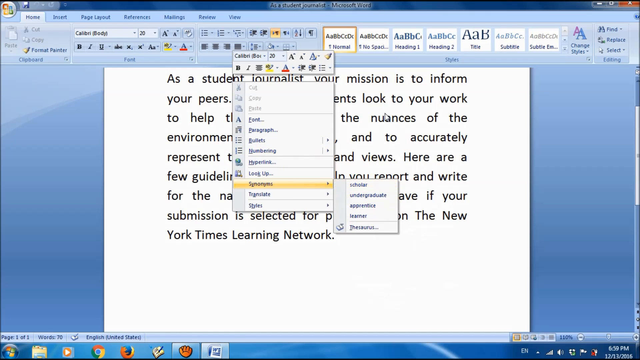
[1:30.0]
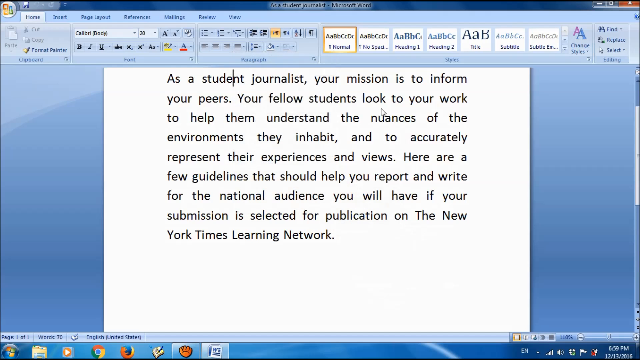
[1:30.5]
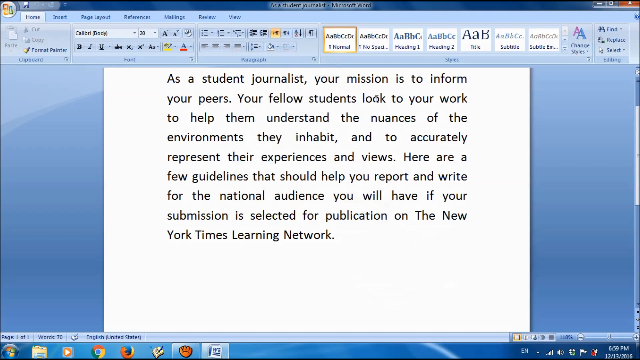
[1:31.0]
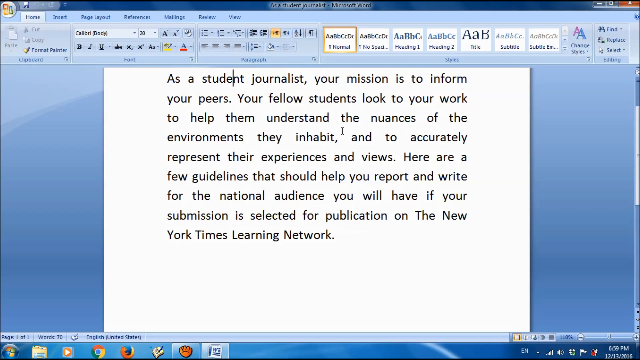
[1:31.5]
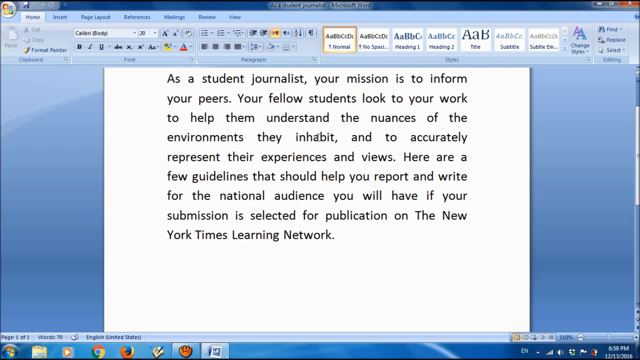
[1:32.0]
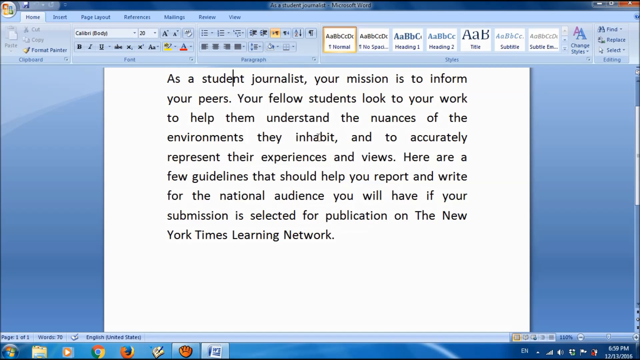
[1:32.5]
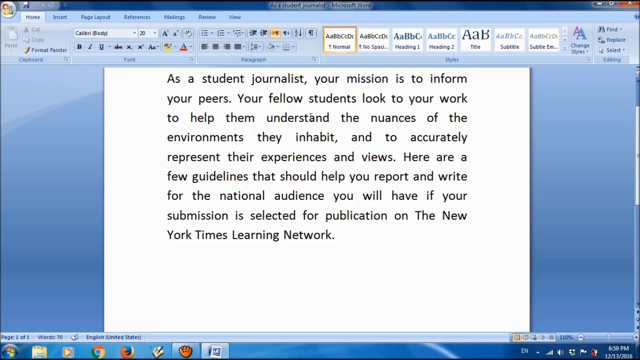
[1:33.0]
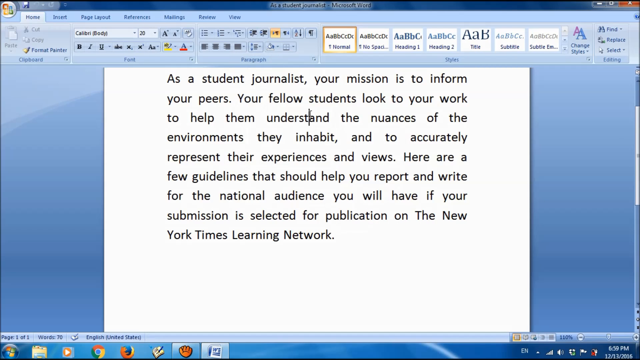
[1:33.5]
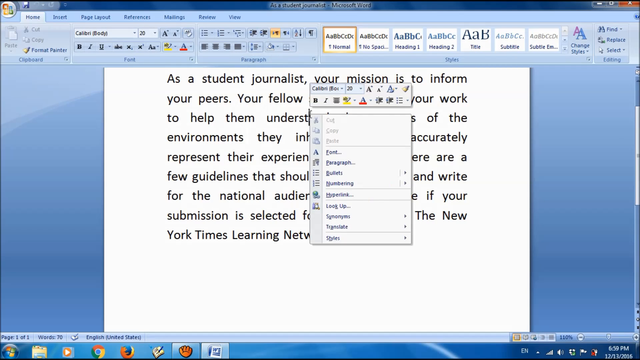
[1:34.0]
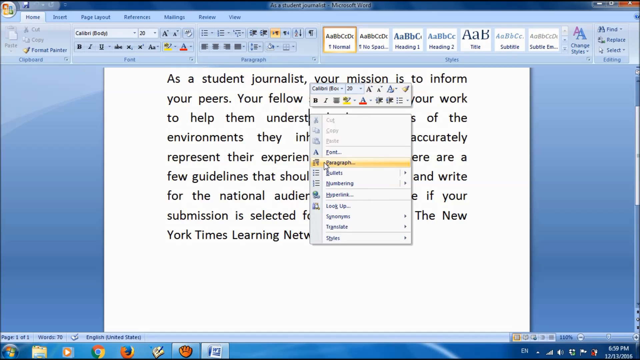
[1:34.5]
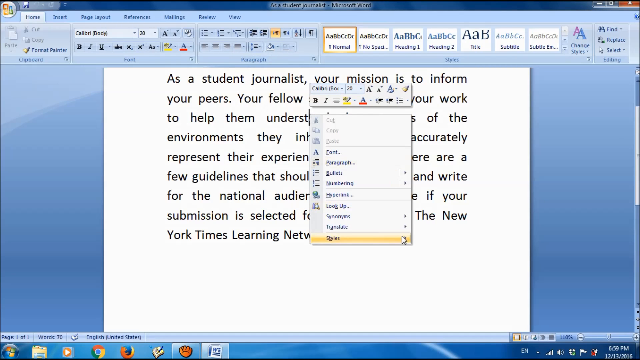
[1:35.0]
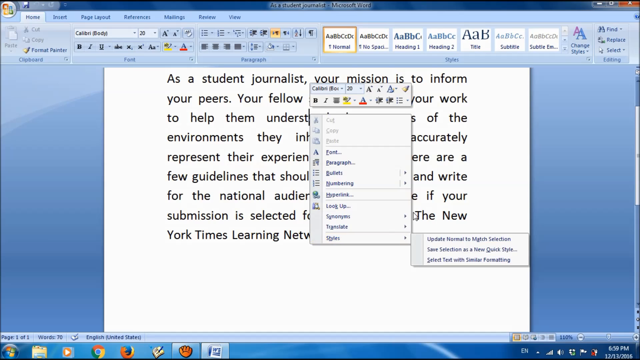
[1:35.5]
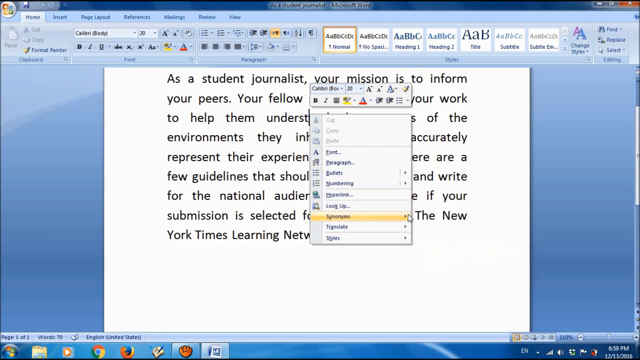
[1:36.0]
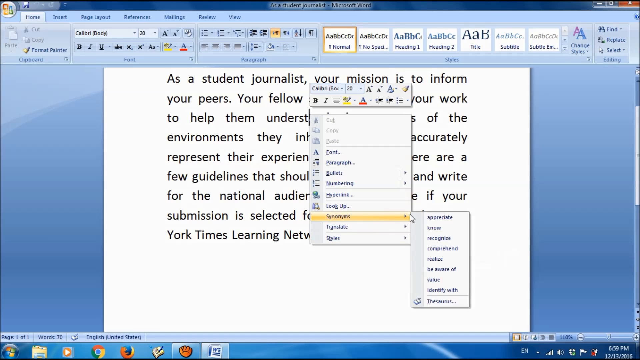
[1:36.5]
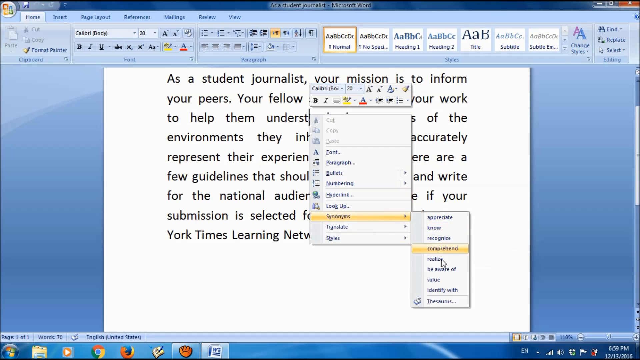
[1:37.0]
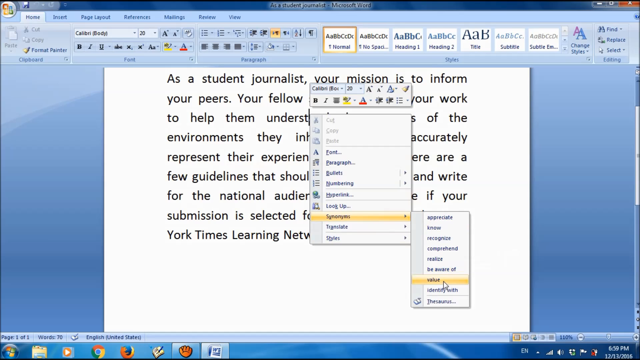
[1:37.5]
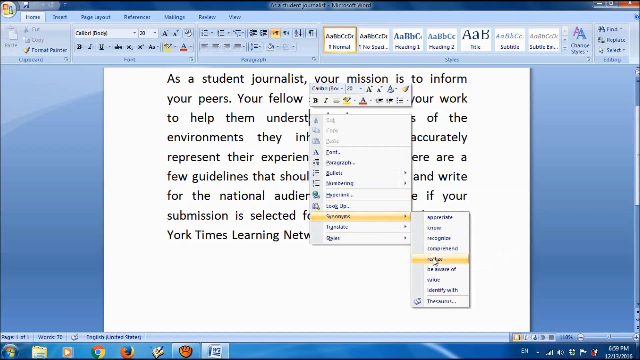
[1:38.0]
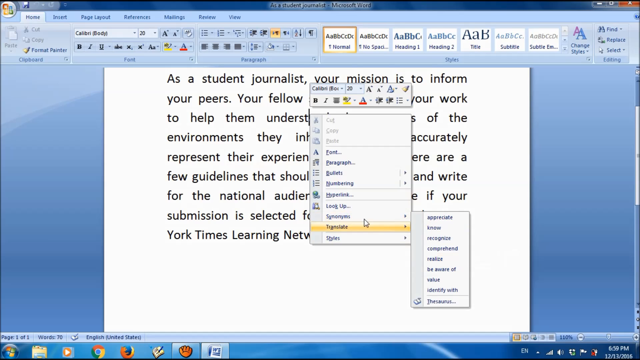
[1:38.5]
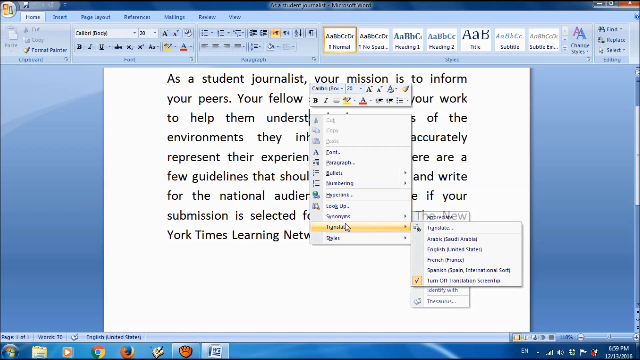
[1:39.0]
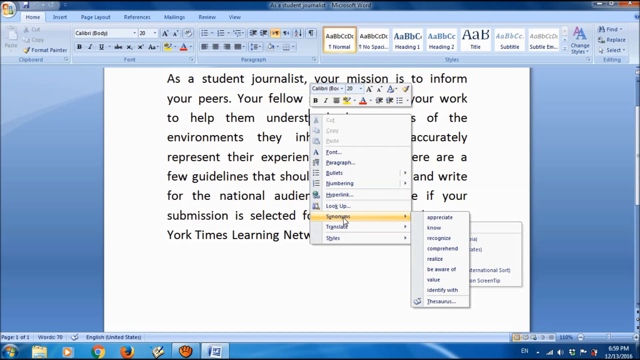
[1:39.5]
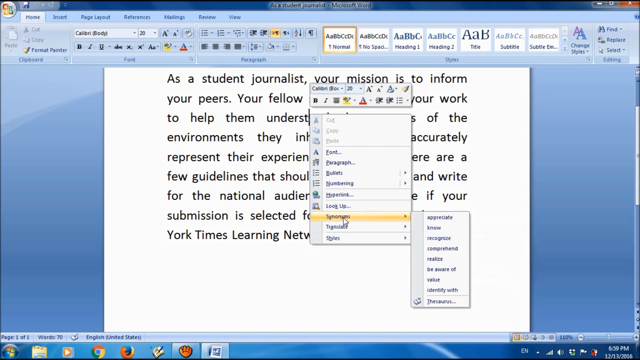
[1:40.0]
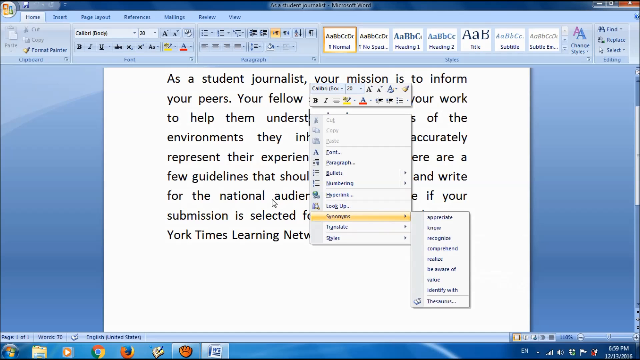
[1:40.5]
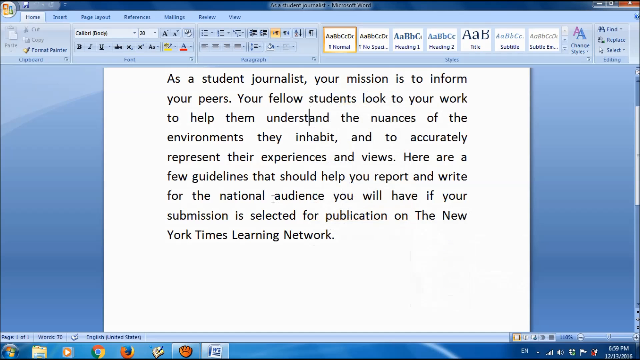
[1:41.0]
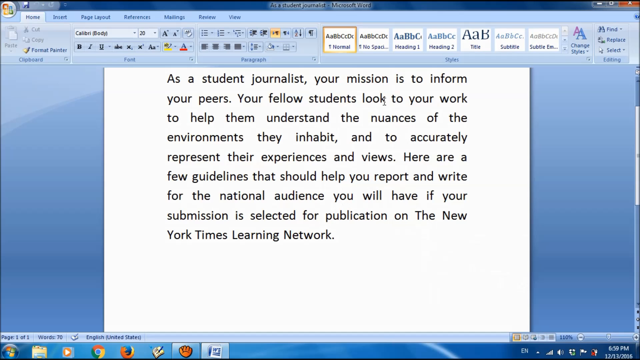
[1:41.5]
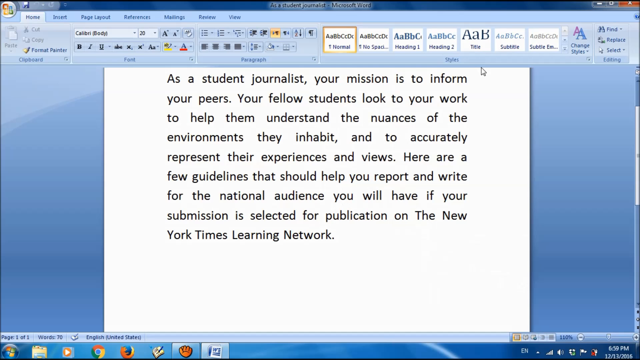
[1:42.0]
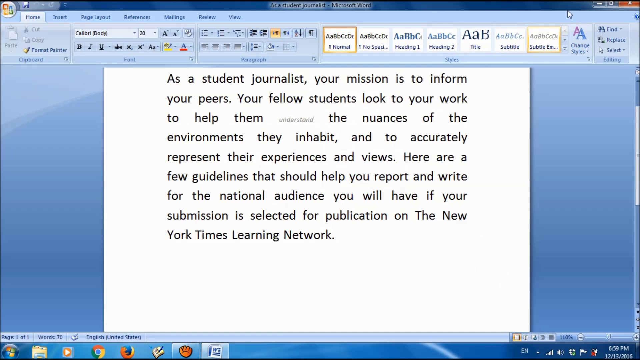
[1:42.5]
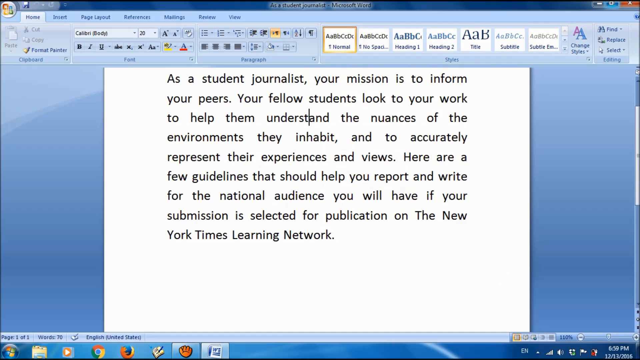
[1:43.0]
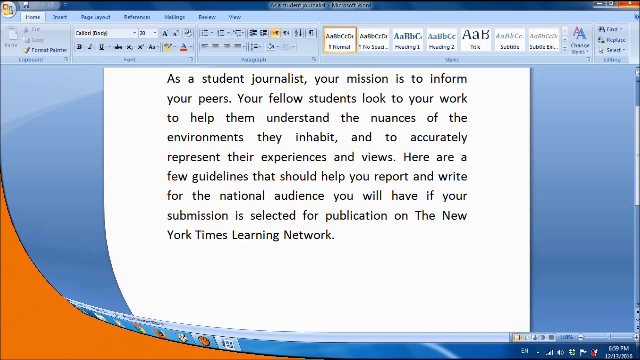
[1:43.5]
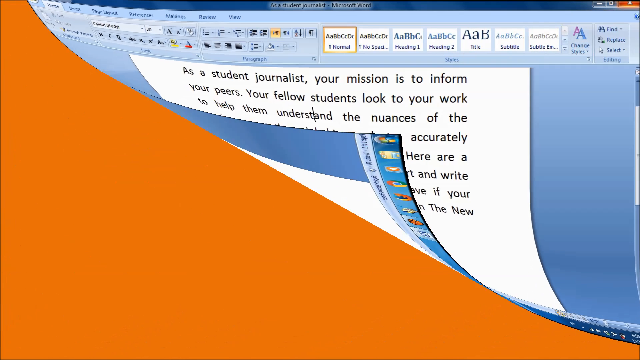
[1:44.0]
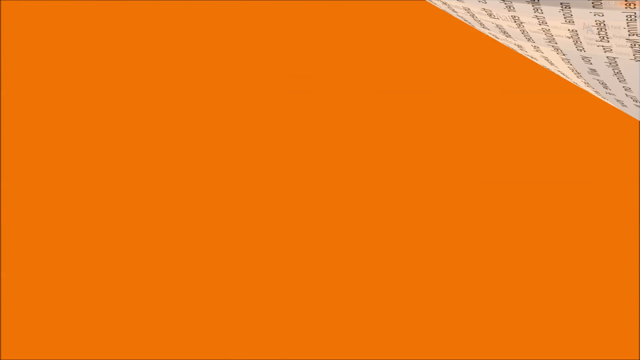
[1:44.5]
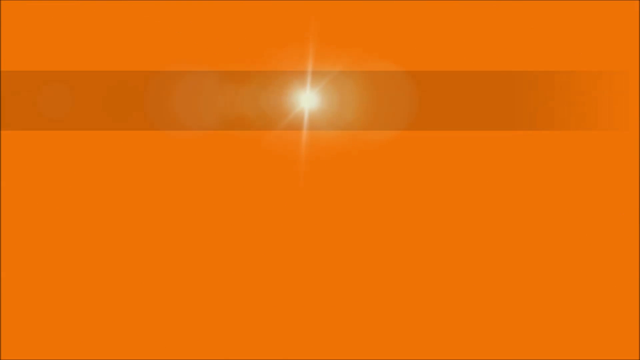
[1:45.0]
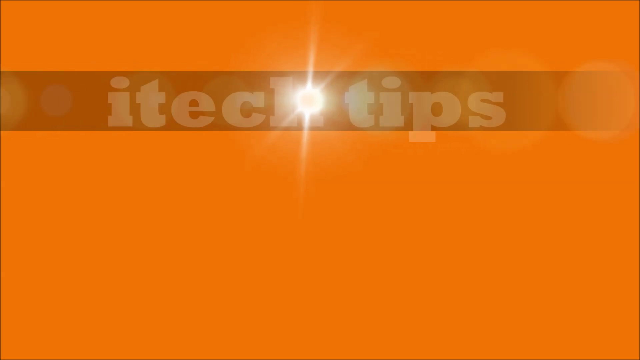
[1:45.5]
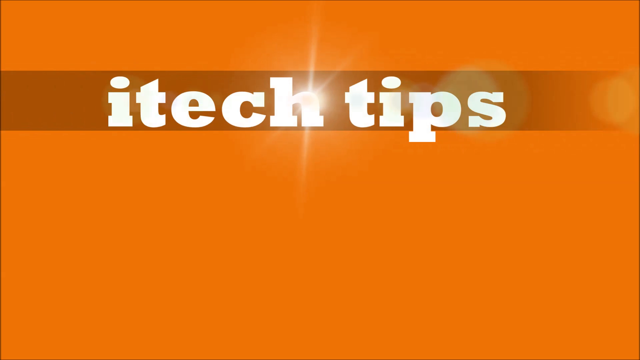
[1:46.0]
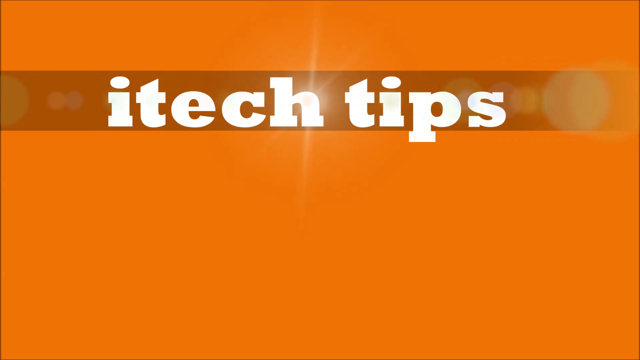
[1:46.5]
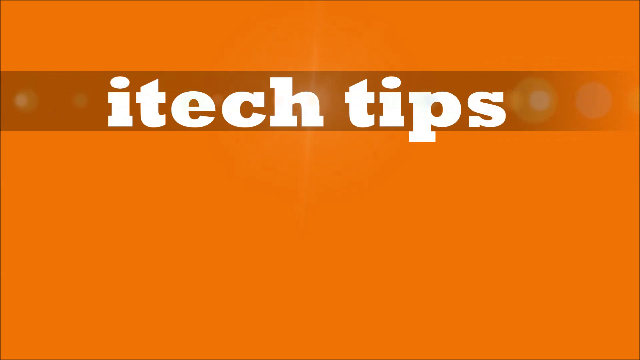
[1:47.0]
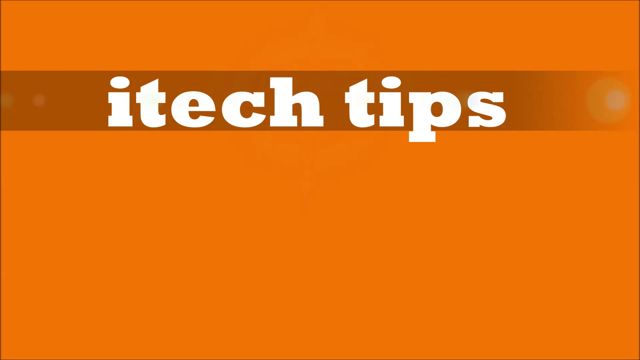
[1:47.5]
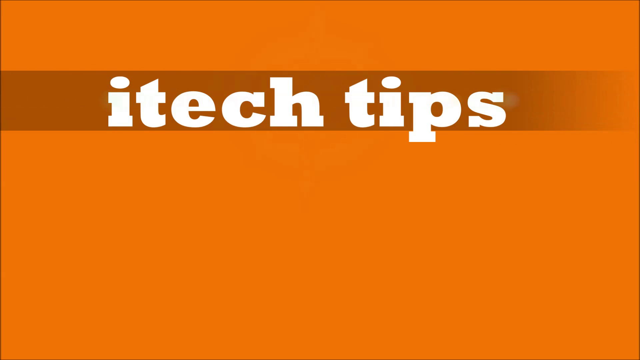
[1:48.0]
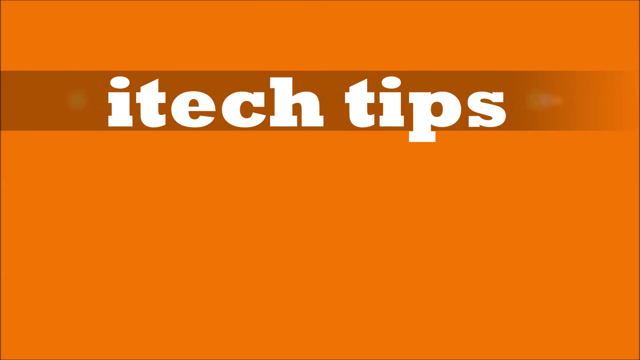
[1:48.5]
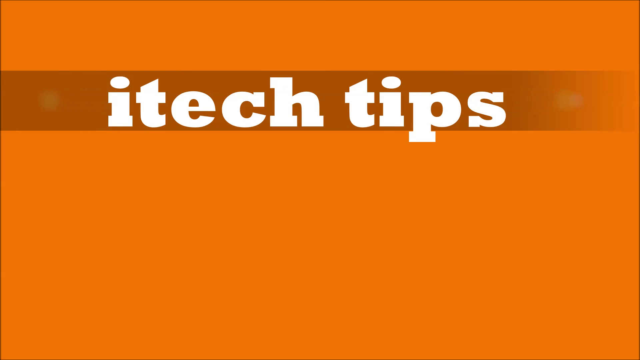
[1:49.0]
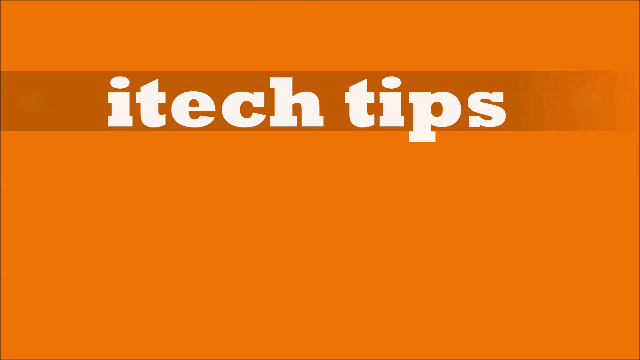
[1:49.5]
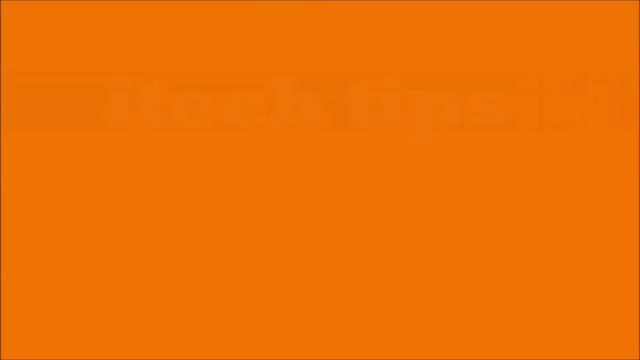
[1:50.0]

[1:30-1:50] A document called "As a student journalist" is open, with a lot of text on the screen; the first sentence says "As a student journalist, your mission is to inform your peers." The cursor moves around and right-clicks on the word "understand," apparently bringing up a menu. The cursor goes to the synonyms, which include appreciate, know, recognize and comprehend, and seems to select one of those words. There is also a link to the thesaurus in the menu, apparently demonstrating how to use the thesaurus in Microsoft Word to replace a word with another word that means the same thing. The whole page then peels away, the whole screen turns orange, and it says "iTechTips."